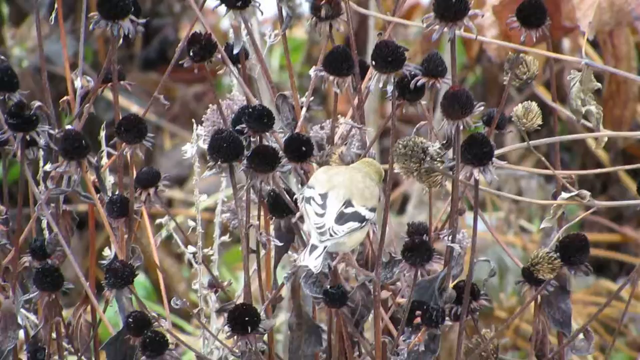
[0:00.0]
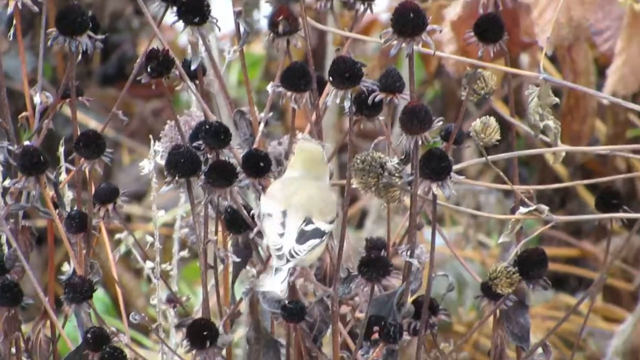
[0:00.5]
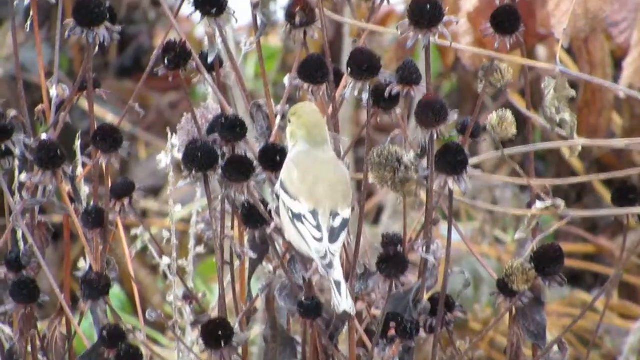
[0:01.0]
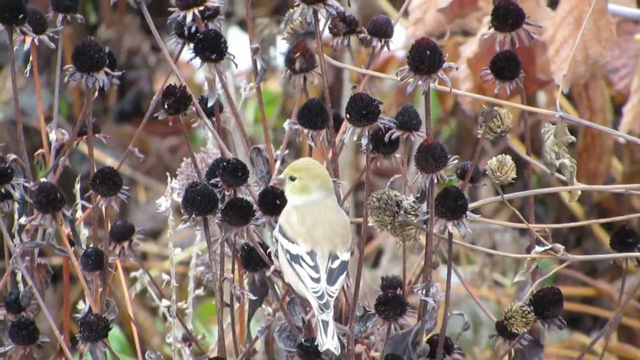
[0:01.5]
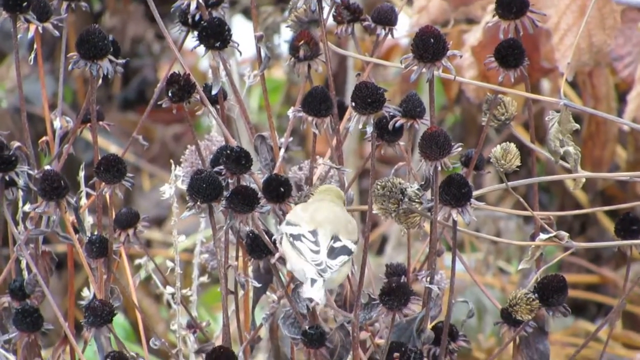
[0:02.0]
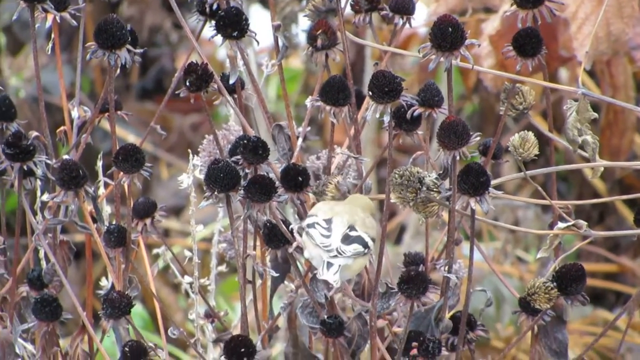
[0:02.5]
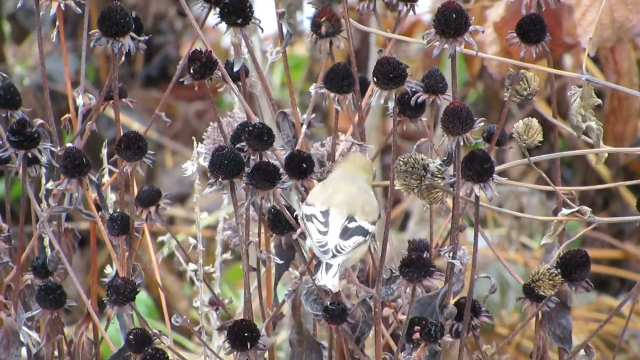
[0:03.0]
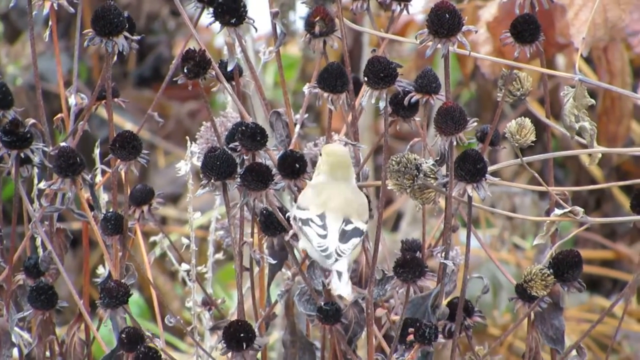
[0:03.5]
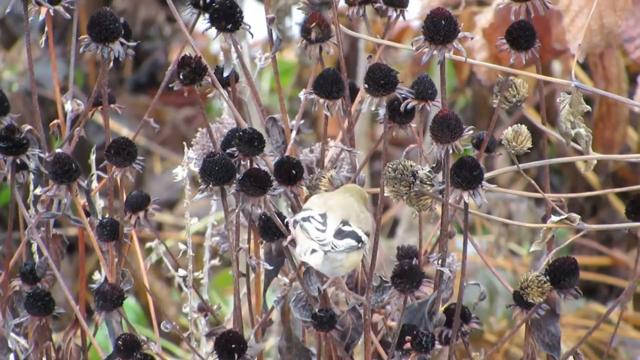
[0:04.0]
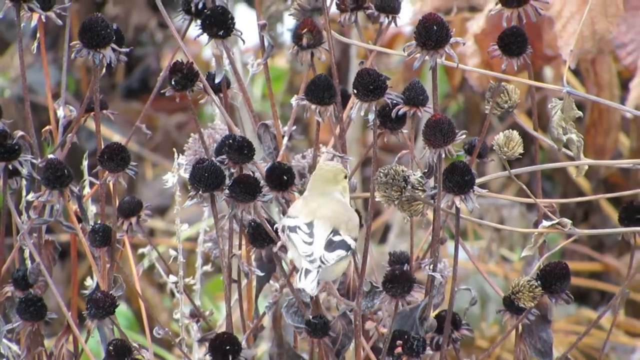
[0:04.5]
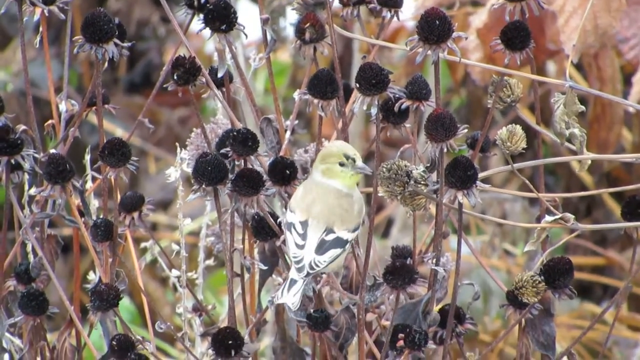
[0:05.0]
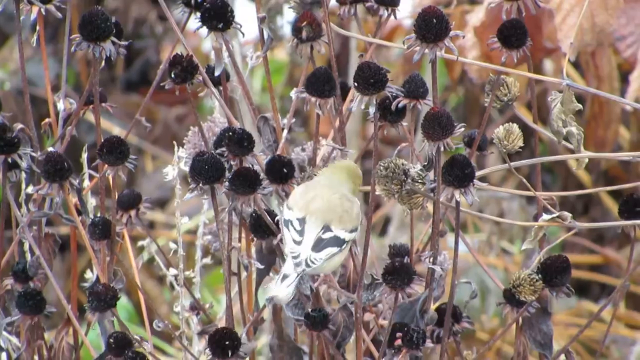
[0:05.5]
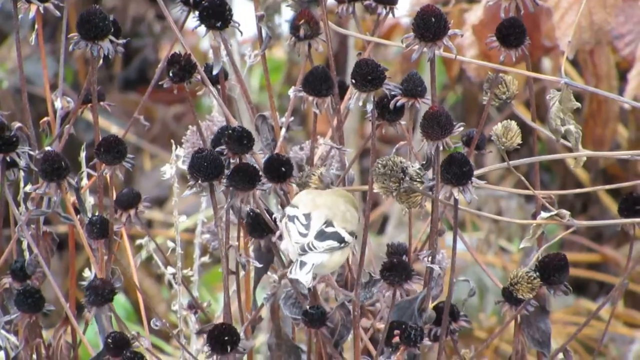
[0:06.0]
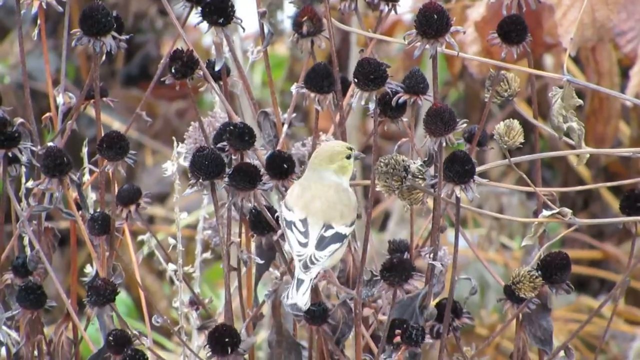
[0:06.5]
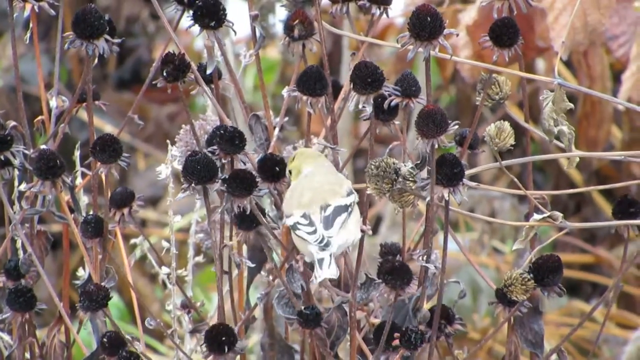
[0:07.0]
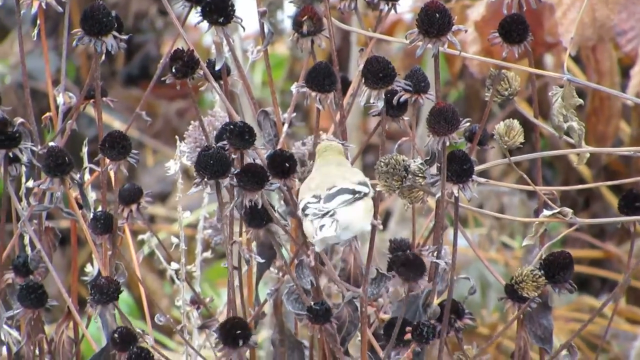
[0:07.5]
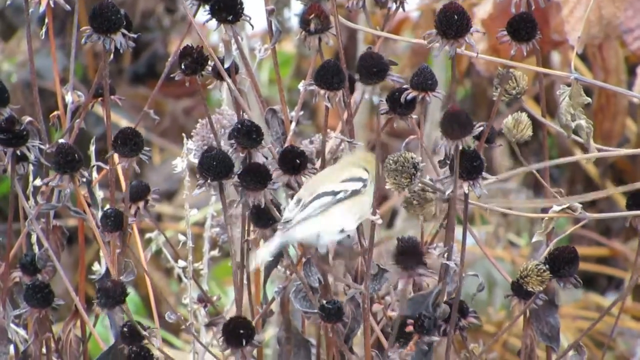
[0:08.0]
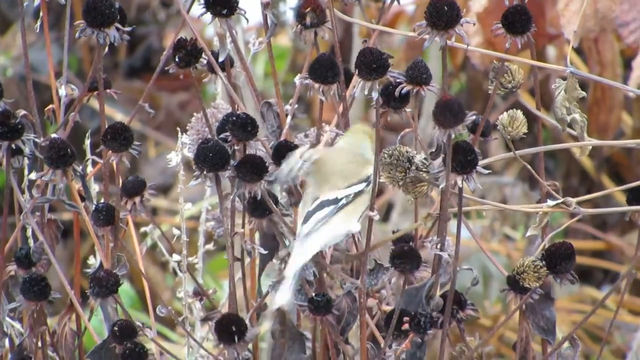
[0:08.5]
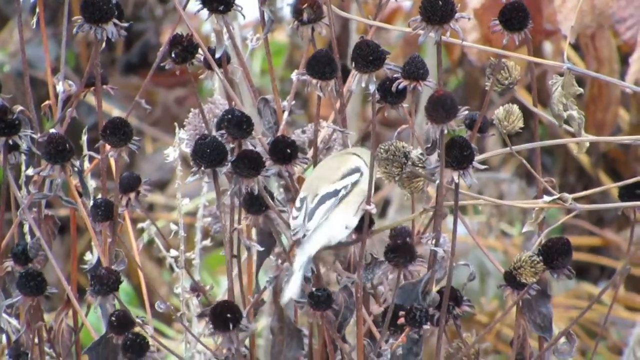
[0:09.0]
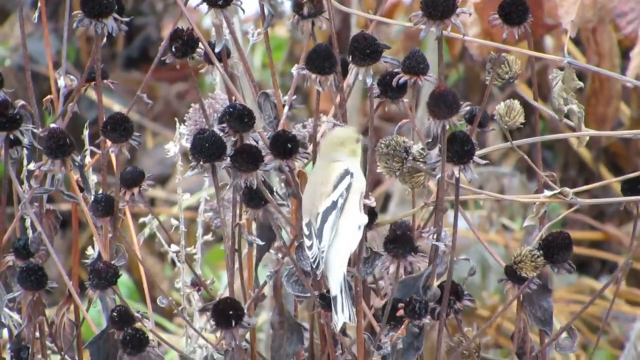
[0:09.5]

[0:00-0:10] A bird perches on what looks to be some dead flowers. The petals appear to have been purple, and the centers are large and black. The bird's wings are black and white, and its body is a greenish gray. It briefly turns its head to the right, showing its beak, which looks to be the more tannish color found on its body. The bird seems to maybe be eating the seeds off the plant it is perching on.